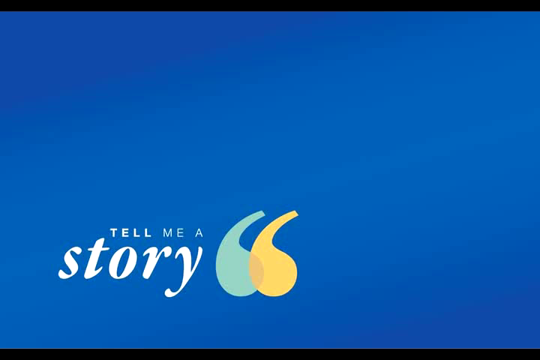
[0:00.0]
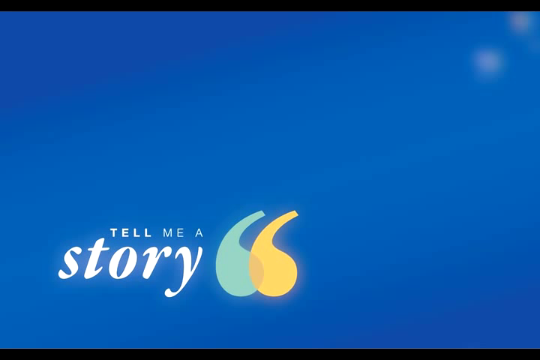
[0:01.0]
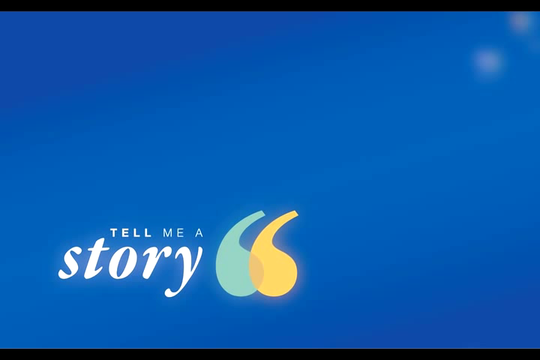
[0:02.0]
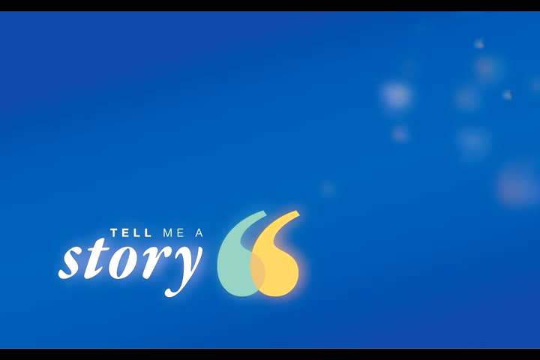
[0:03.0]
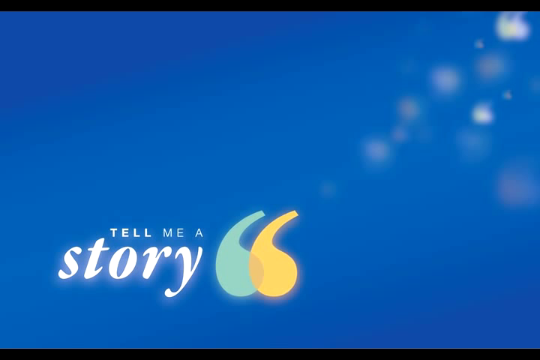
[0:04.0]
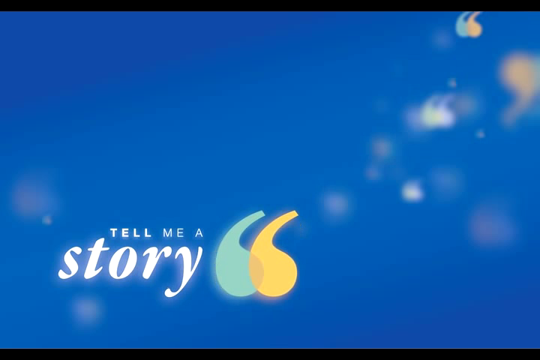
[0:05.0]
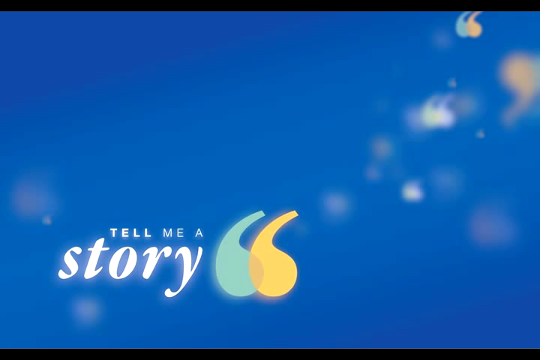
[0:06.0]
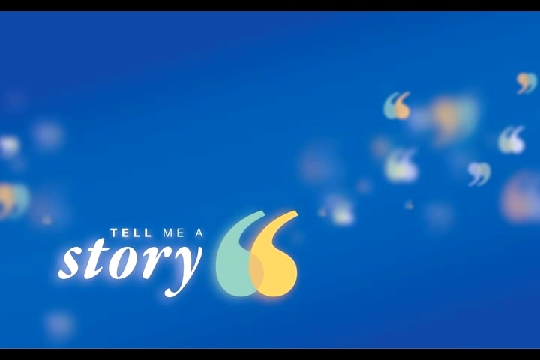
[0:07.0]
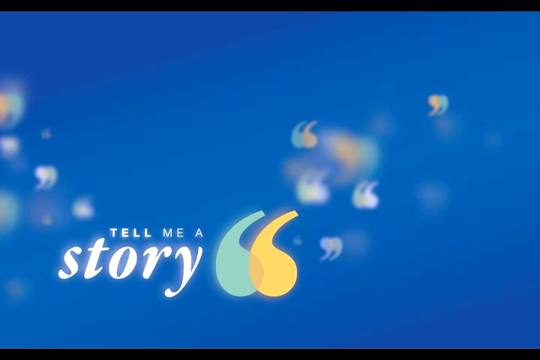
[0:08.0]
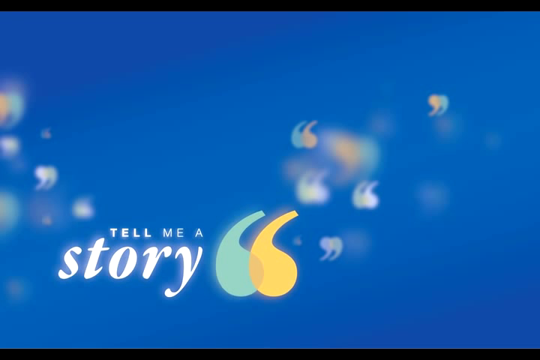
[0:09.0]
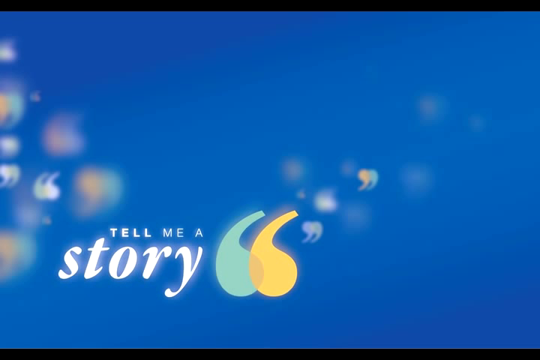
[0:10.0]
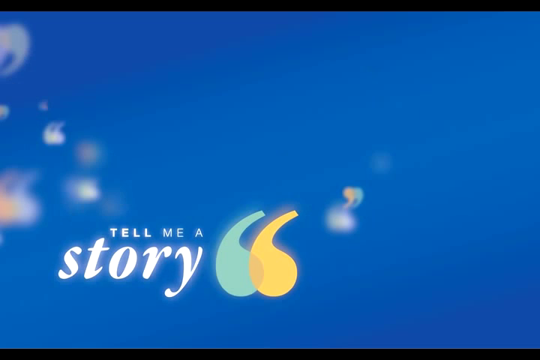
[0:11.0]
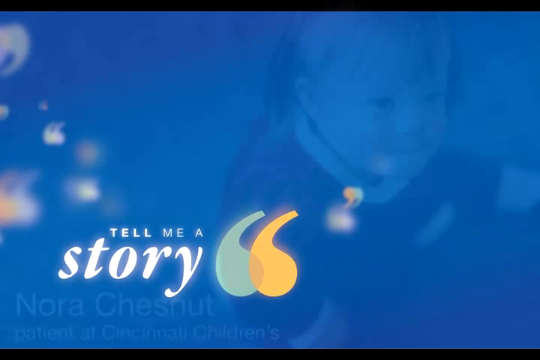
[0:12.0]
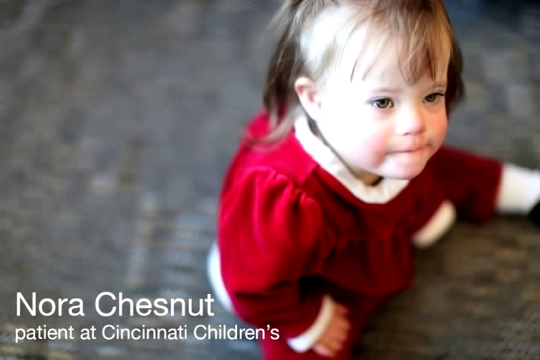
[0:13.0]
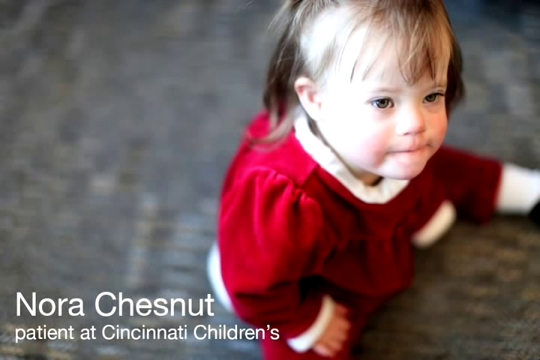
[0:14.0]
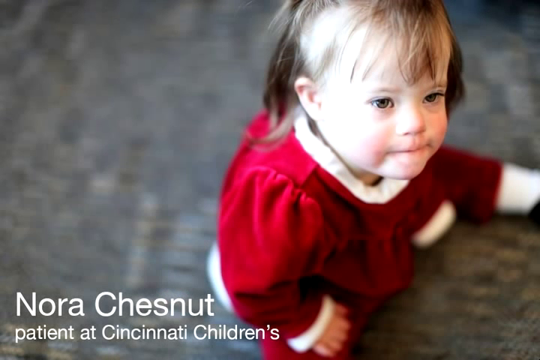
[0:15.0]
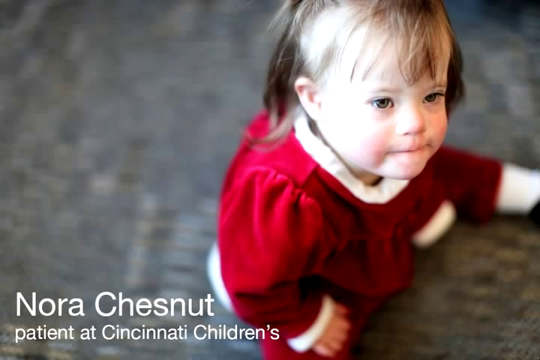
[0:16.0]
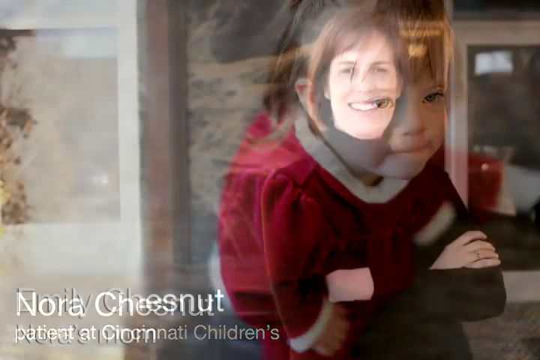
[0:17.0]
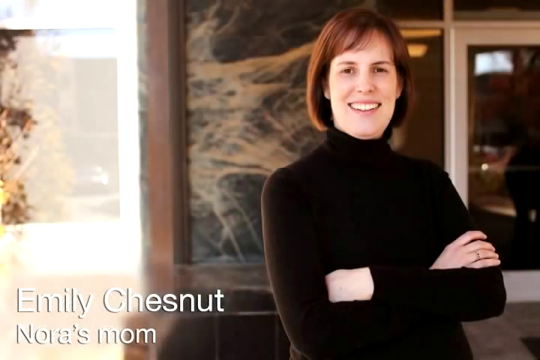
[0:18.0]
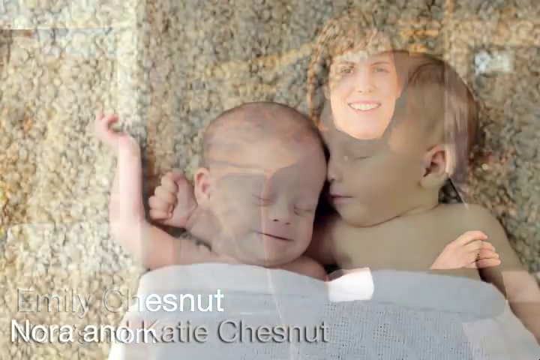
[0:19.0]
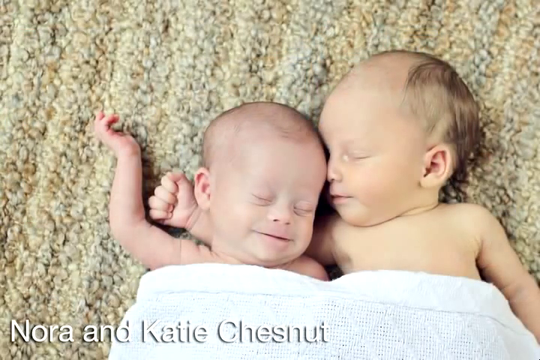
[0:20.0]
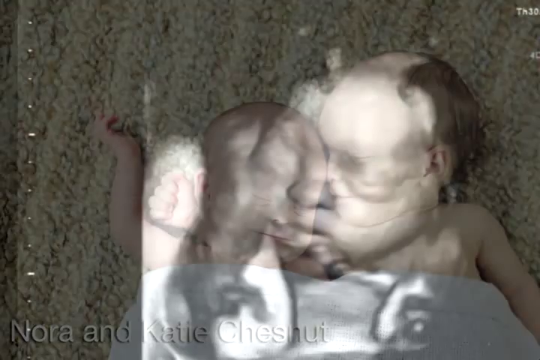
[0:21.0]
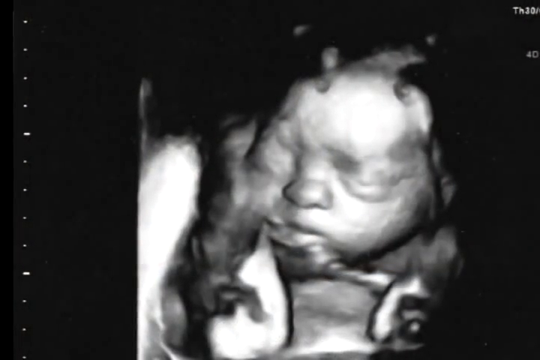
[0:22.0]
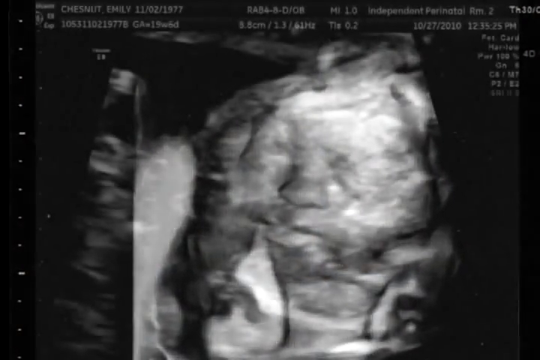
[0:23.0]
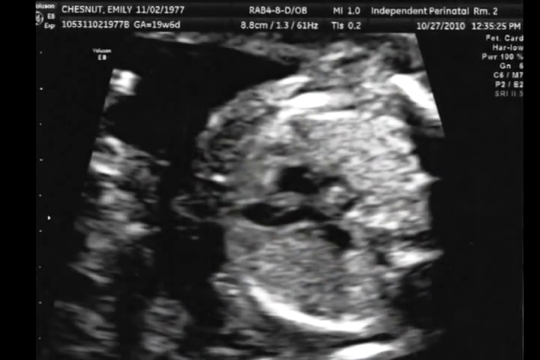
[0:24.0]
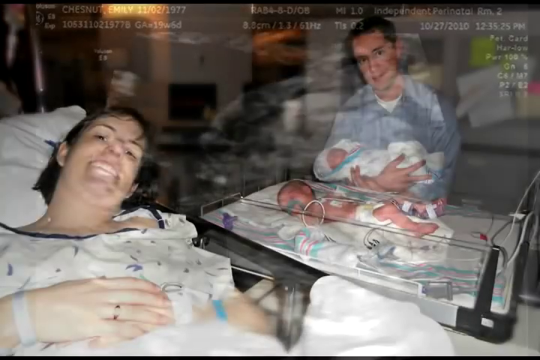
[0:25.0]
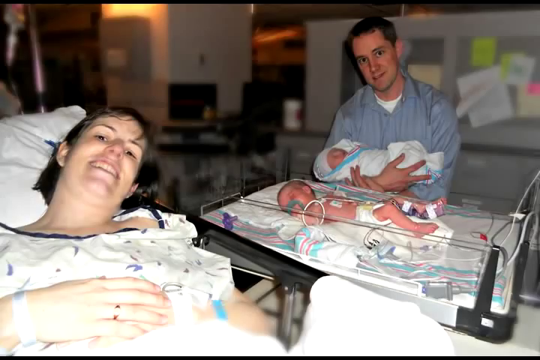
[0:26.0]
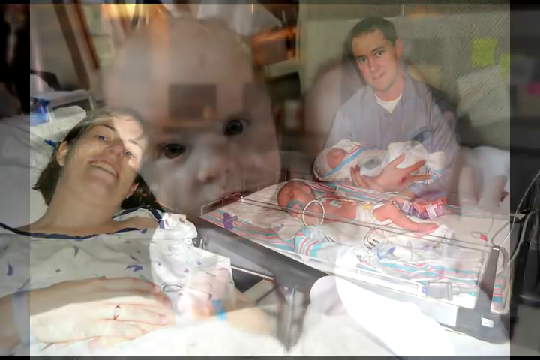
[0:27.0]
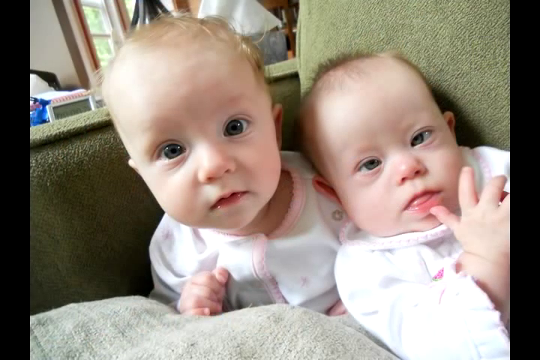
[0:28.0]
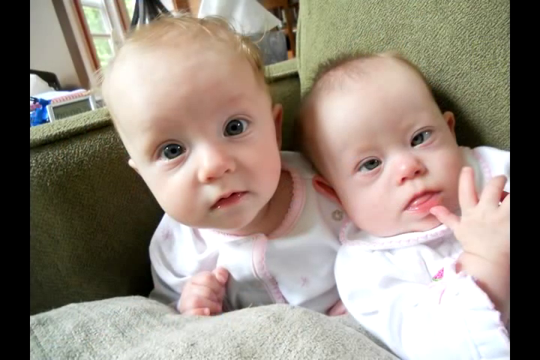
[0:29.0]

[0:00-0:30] On a blue screen, small white letters read "tell me" and big letters read "story," along with something like upside-down quotation marks, one green and one yellow. What look like stars in the background turn into quotation marks, some upside down and some right side up. The scene changes to a little girl, with text reading "Nora Chestnut patient at Cincinnati Children's." Her mom, Emily Chestnut, is shown, followed by the twins Nora and Kate Chestnut and an ultrasound of the babies inside the womb. The mother is shown in her bed, then a man who is possibly the father. A picture of the twins follows: one of the little girls appears to be fine, while a difference is visible in Nora's eyes.